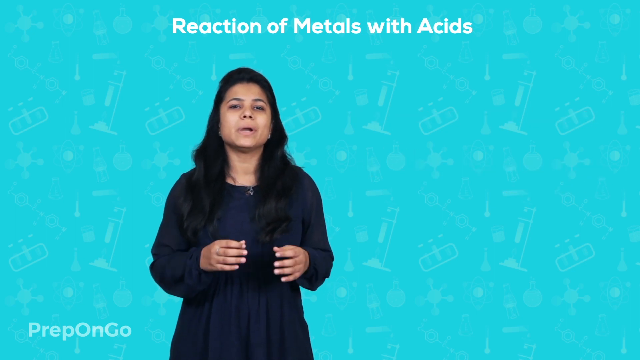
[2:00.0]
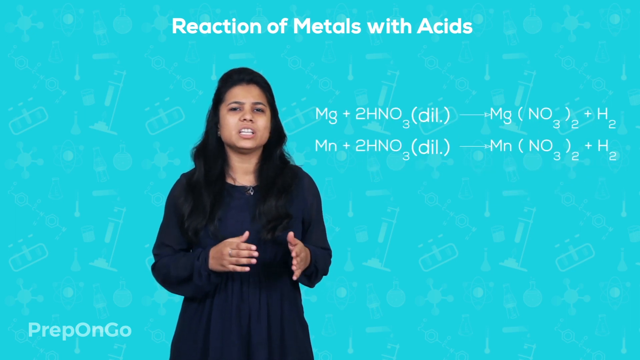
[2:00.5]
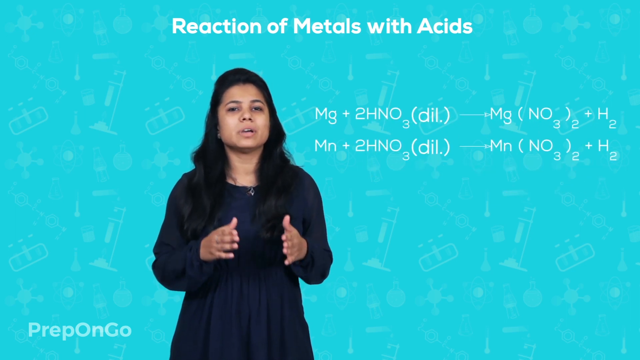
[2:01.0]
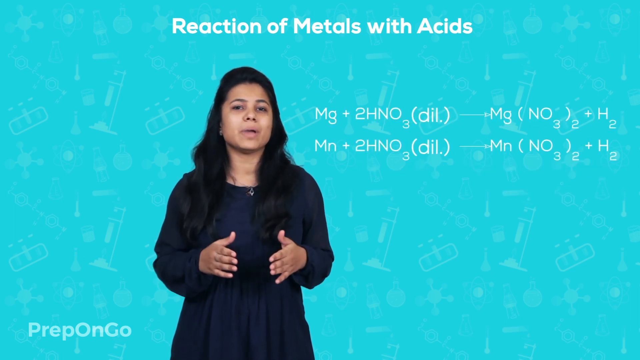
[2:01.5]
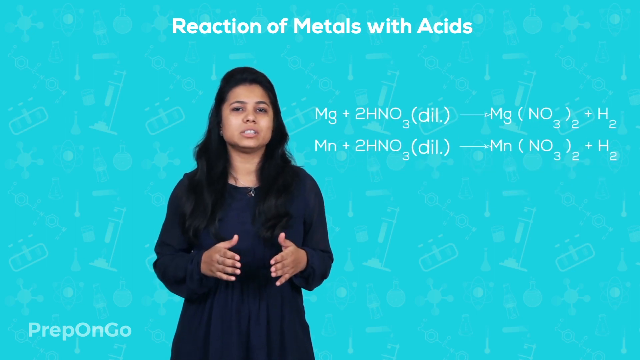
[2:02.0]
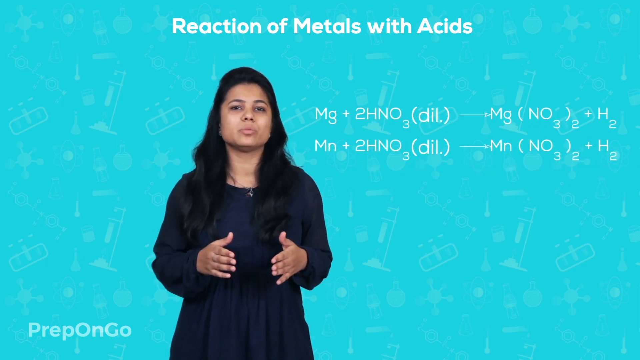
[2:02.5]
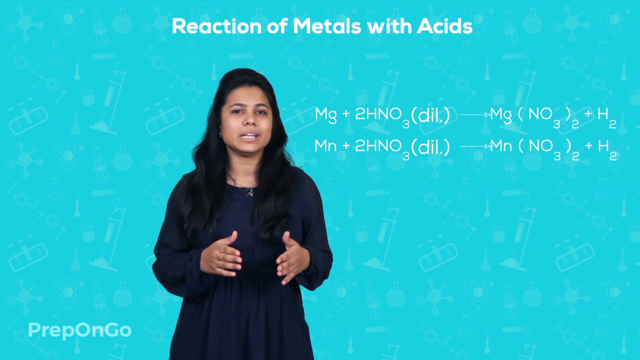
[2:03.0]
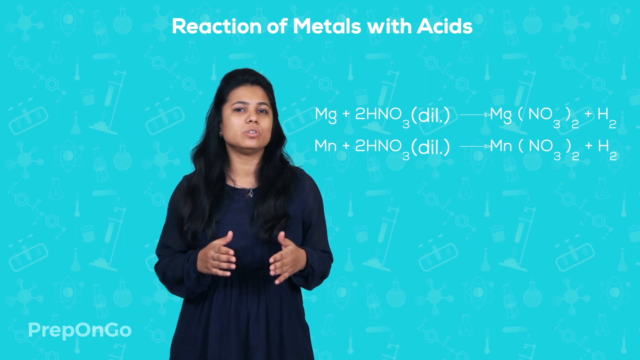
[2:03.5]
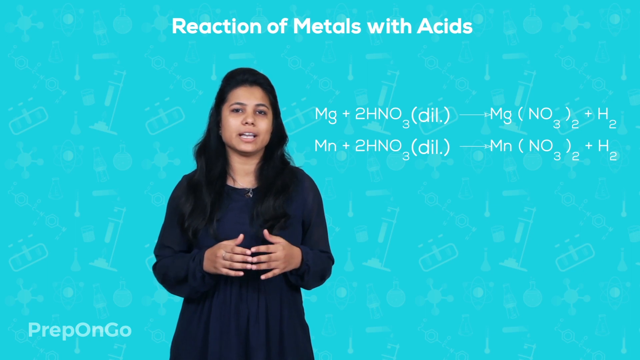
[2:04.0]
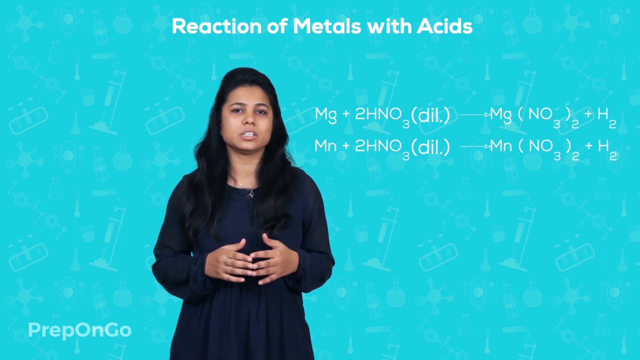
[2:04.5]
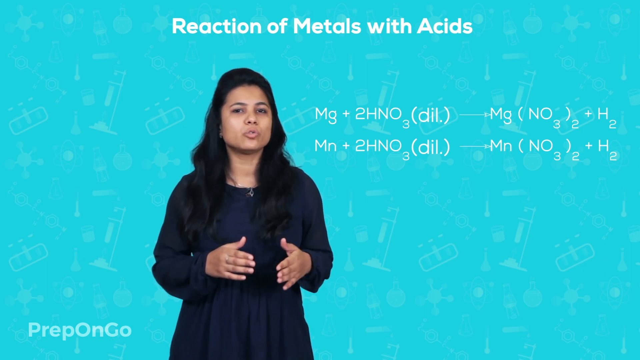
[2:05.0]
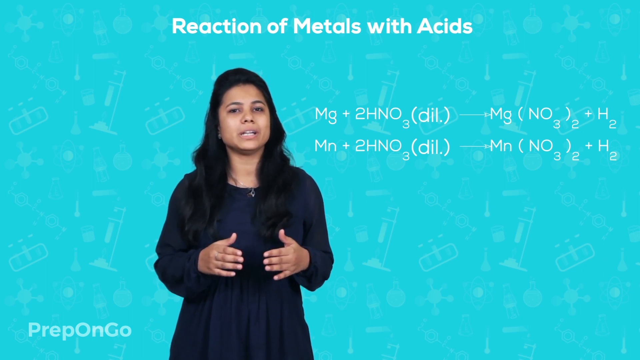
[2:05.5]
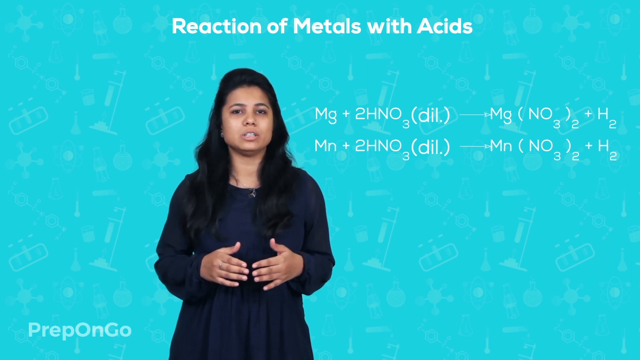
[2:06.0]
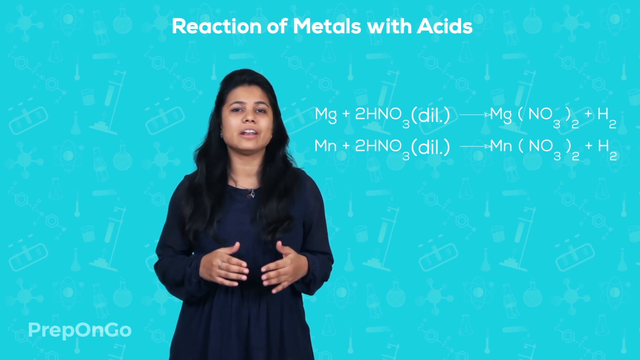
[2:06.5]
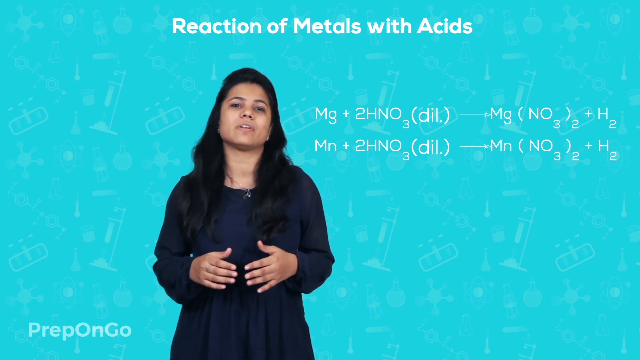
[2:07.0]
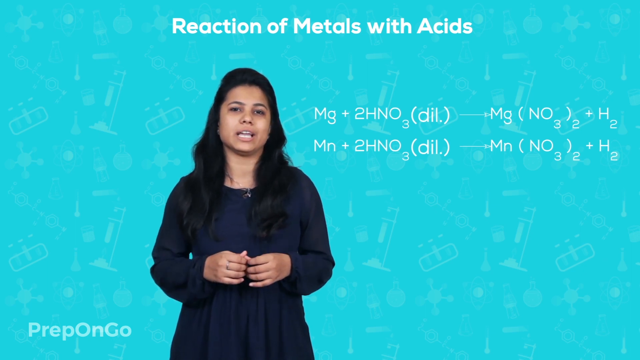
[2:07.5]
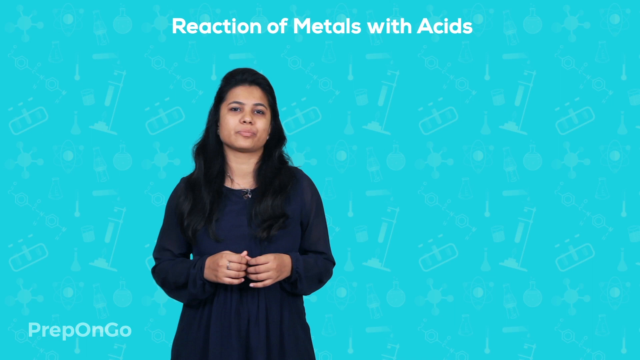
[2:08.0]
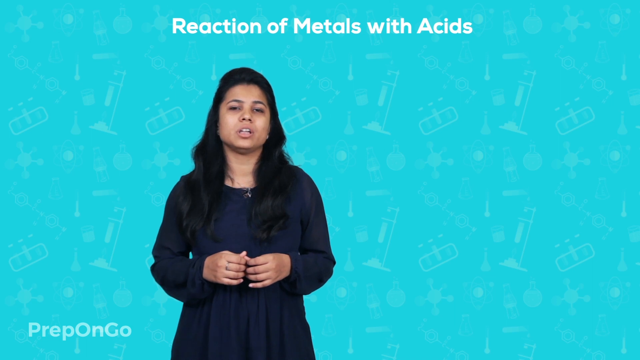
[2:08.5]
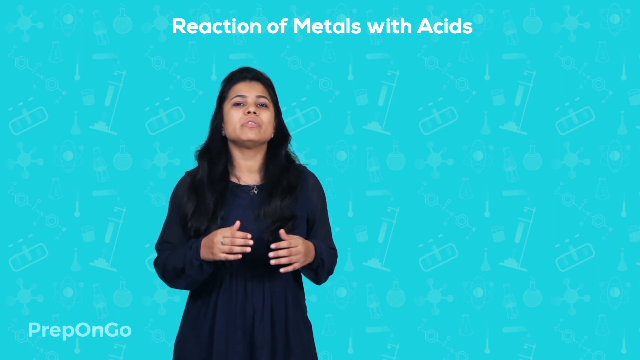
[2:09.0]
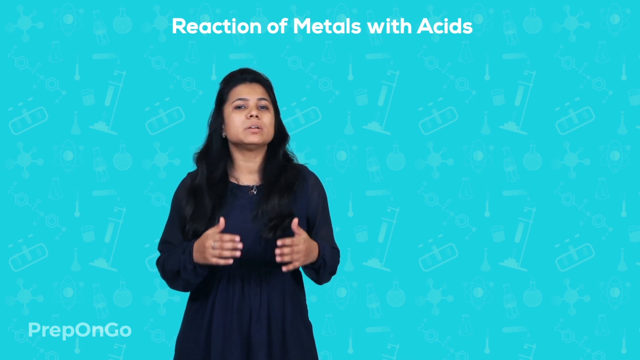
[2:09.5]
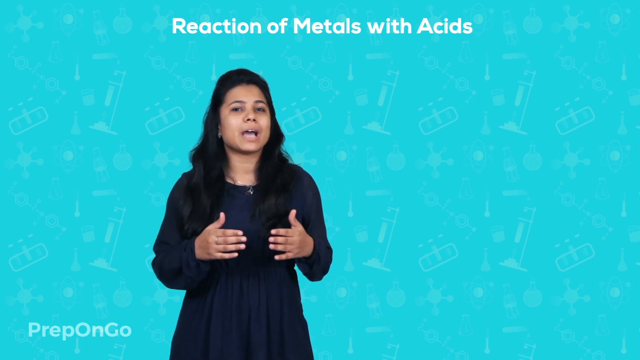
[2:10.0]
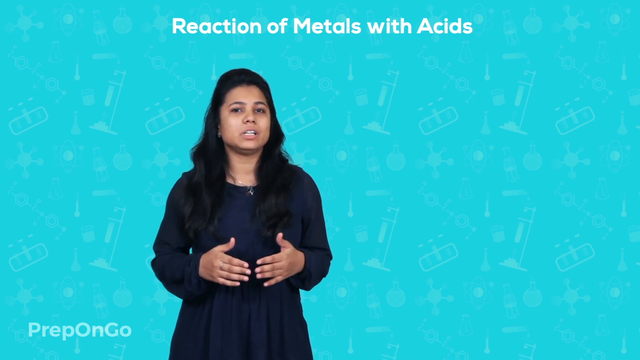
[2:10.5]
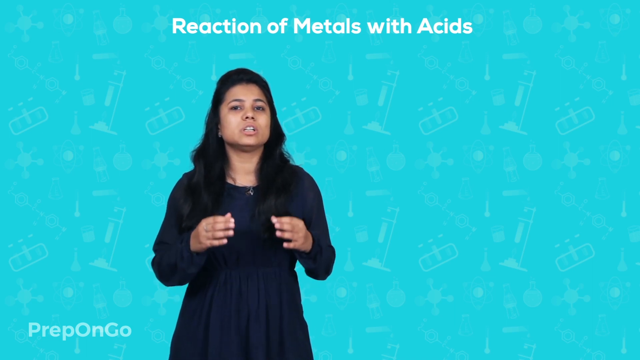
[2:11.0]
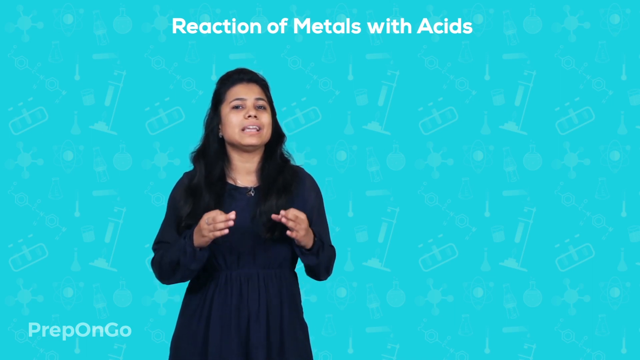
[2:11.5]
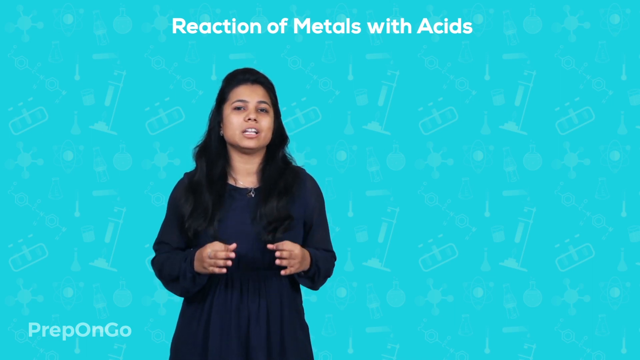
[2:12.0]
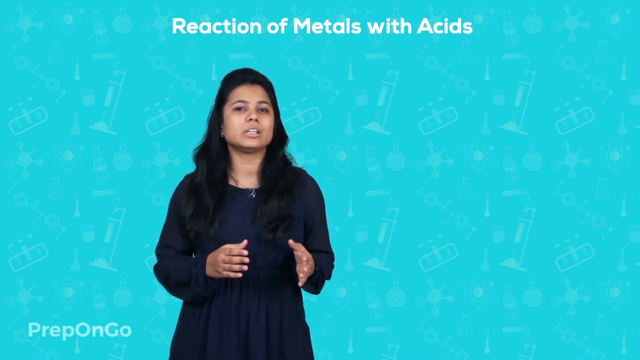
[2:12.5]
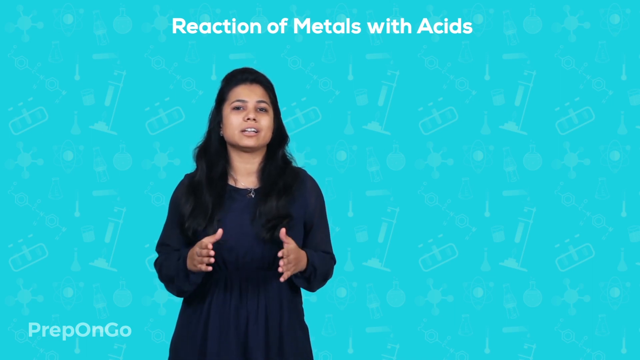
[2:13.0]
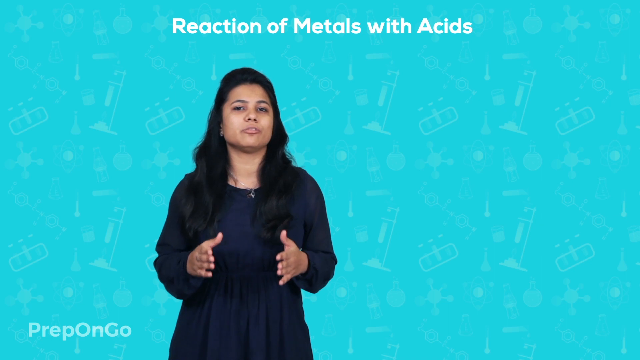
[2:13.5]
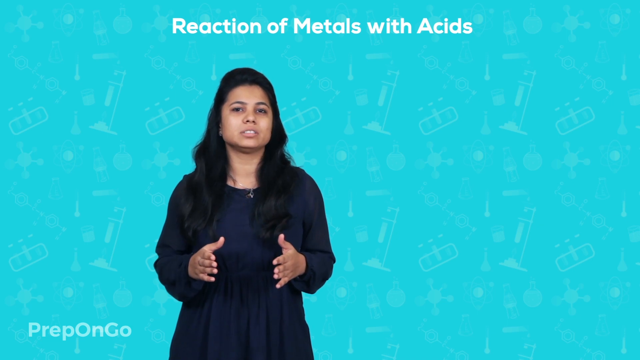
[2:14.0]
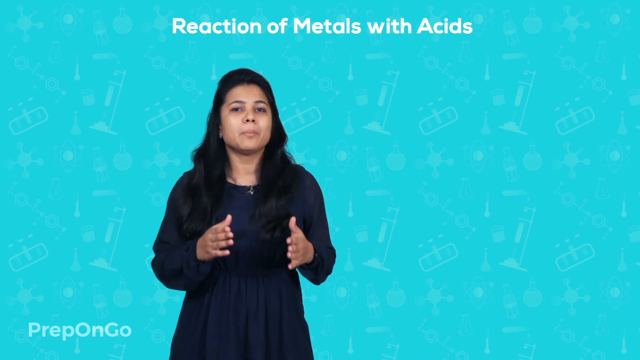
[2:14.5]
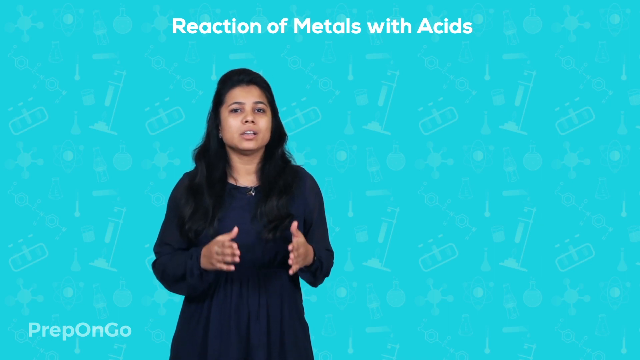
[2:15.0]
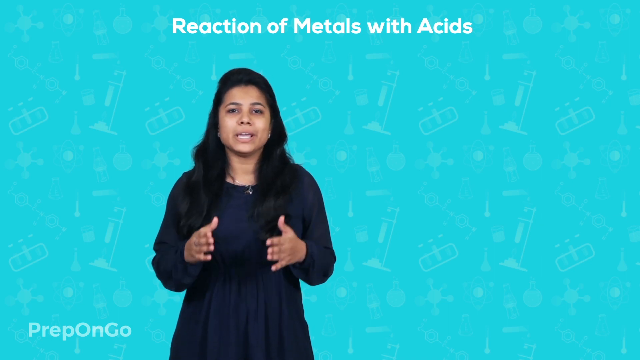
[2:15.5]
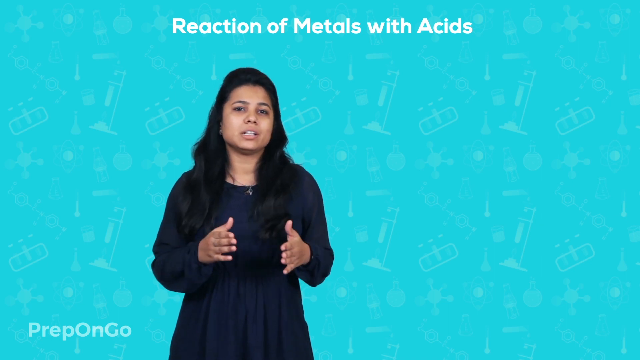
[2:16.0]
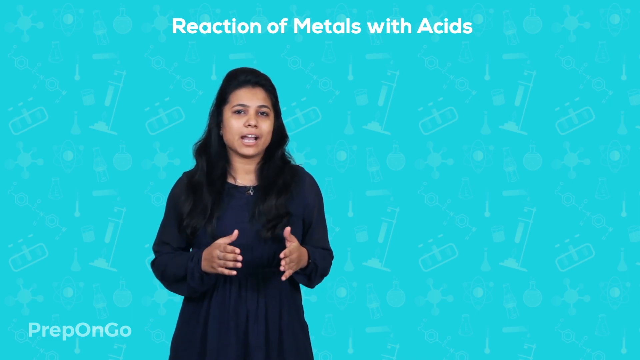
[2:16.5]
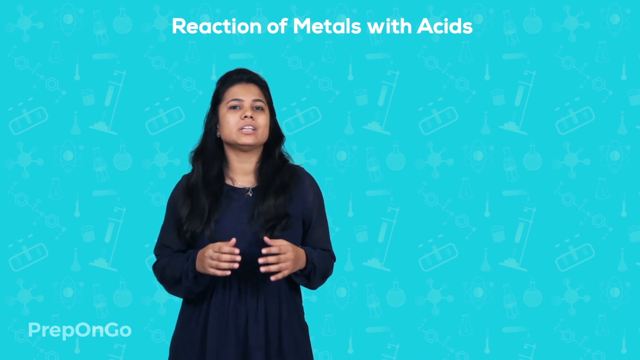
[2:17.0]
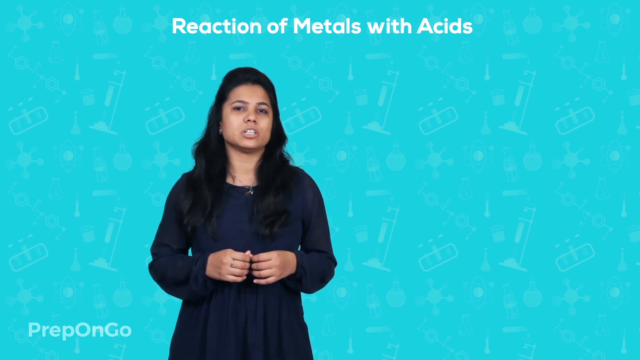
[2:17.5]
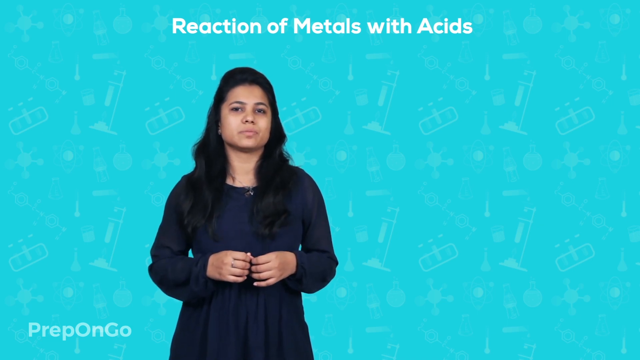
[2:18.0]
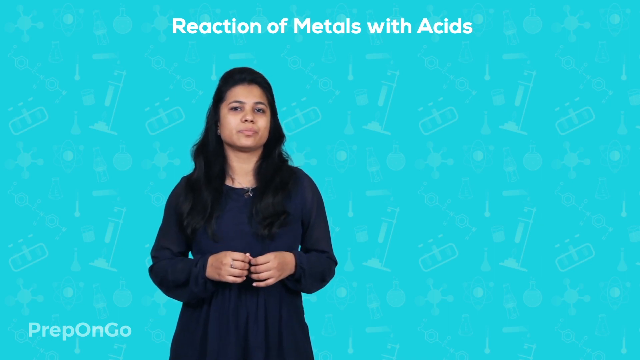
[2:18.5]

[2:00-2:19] Two lines of formulas show the reactions of magnesium (Mg) and manganese (Mn) with dilute nitric acid, written in formula form rather than words. The first line shows magnesium reacting with dilute nitric acid to produce magnesium nitrate and hydrogen gas; the second shows manganese reacting with dilute nitric acid to form manganese nitrate and hydrogen gas. The host continues talking, and toward the end the two lines of formulas disappear while she keeps talking until the video ends.